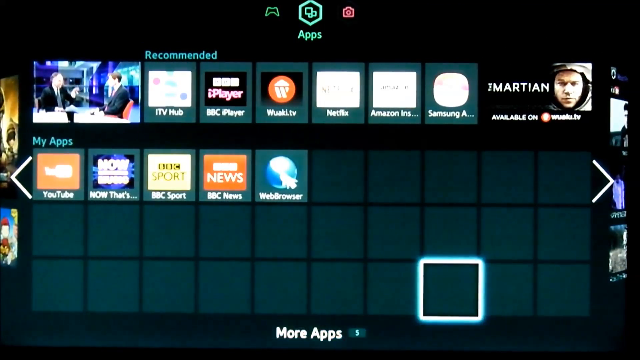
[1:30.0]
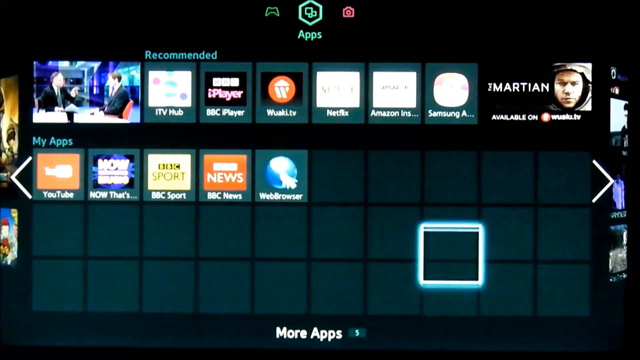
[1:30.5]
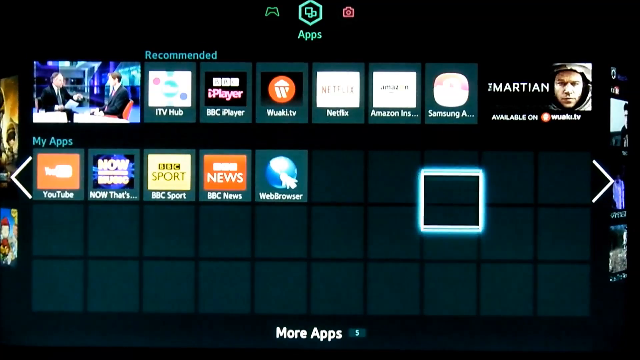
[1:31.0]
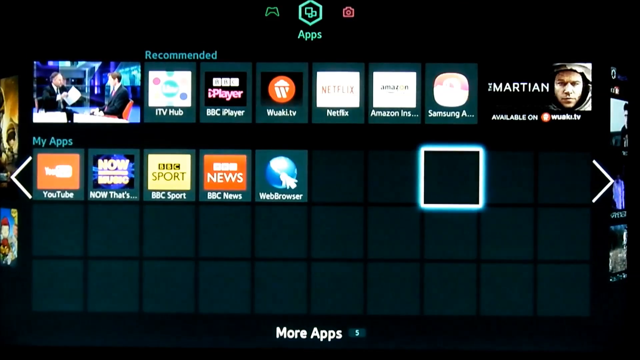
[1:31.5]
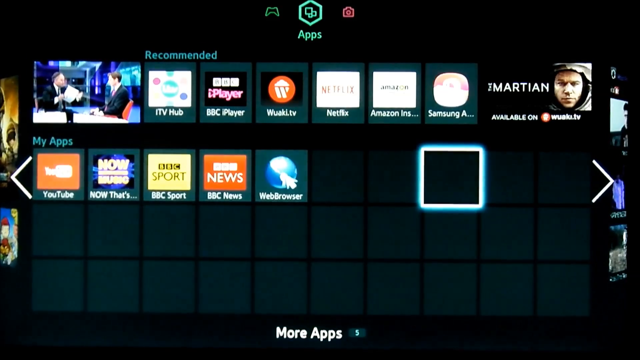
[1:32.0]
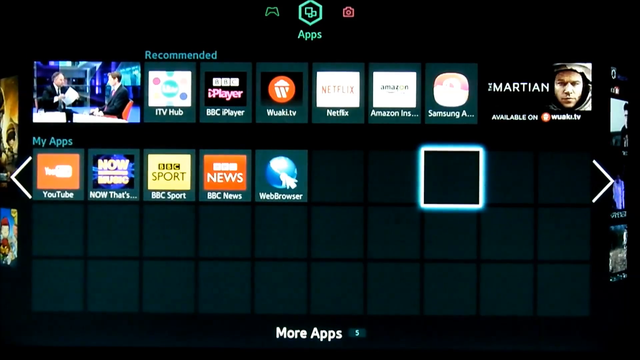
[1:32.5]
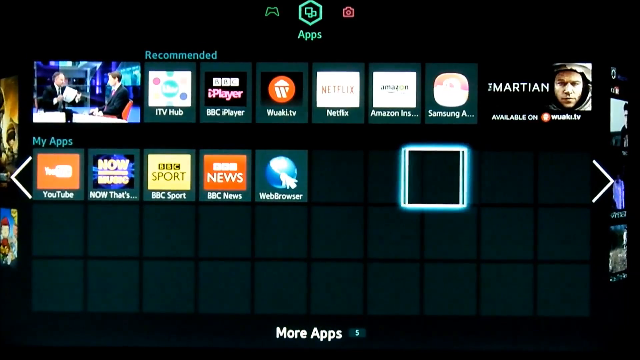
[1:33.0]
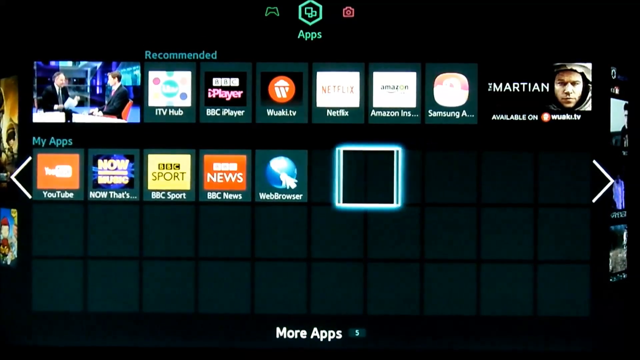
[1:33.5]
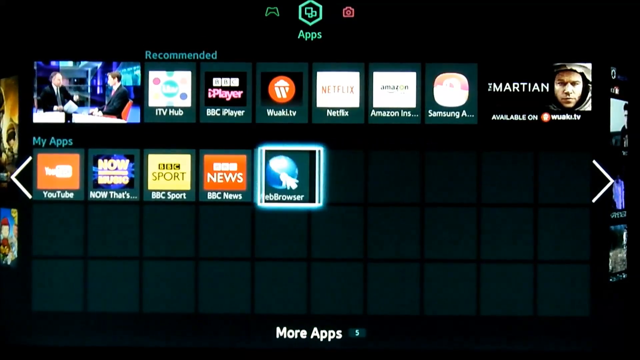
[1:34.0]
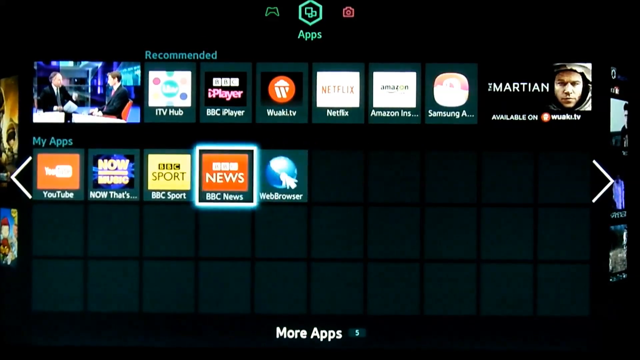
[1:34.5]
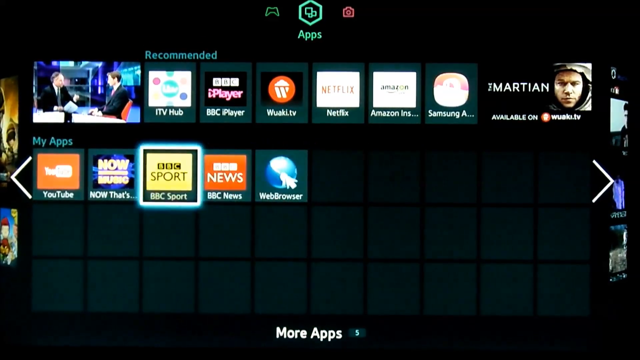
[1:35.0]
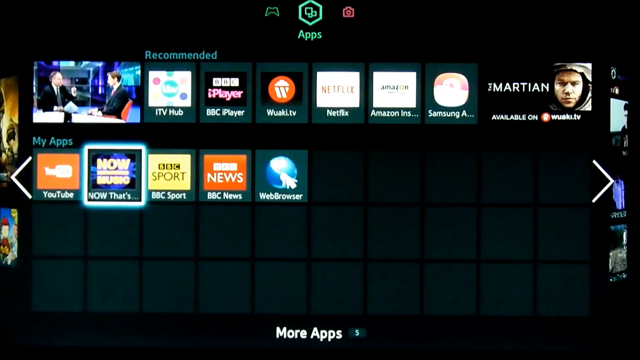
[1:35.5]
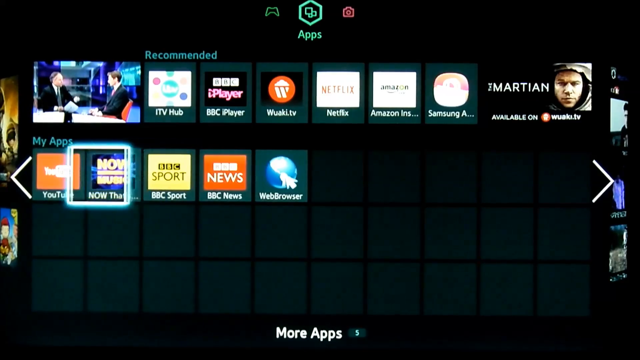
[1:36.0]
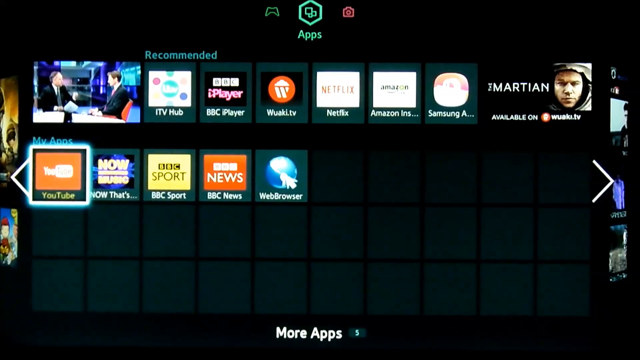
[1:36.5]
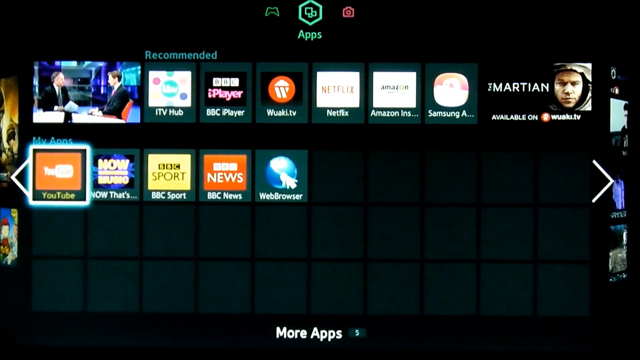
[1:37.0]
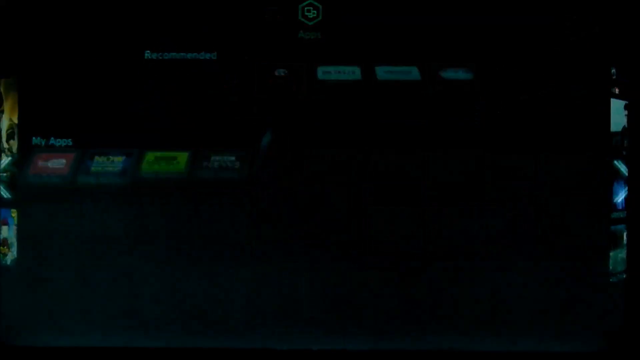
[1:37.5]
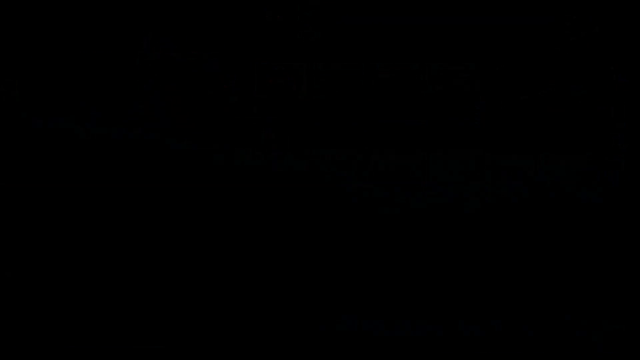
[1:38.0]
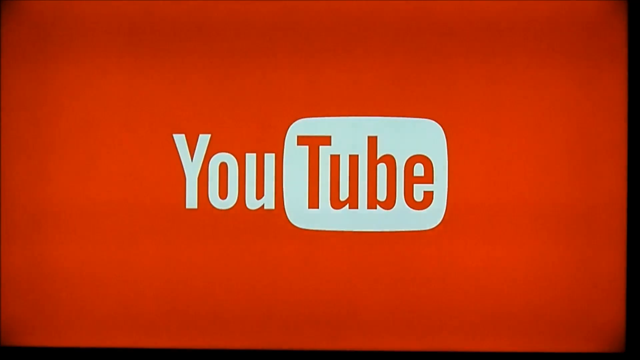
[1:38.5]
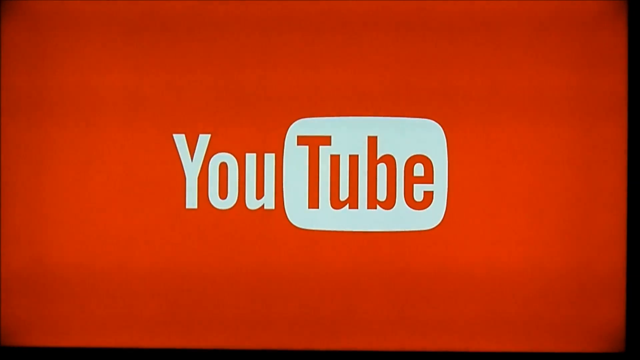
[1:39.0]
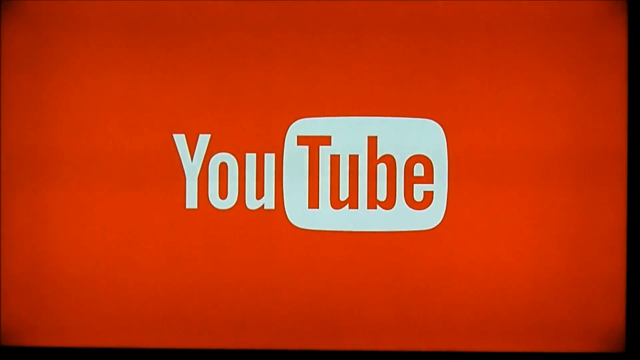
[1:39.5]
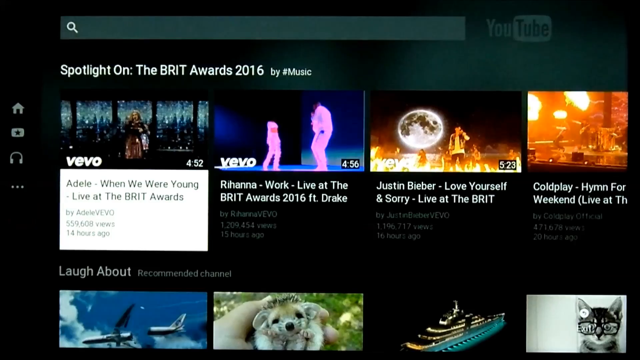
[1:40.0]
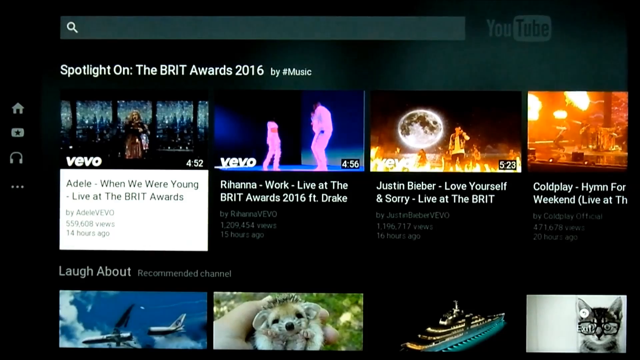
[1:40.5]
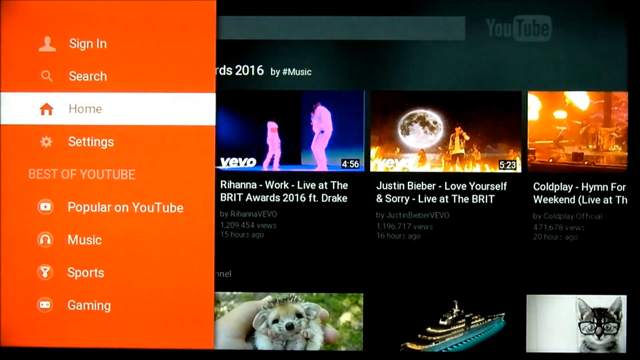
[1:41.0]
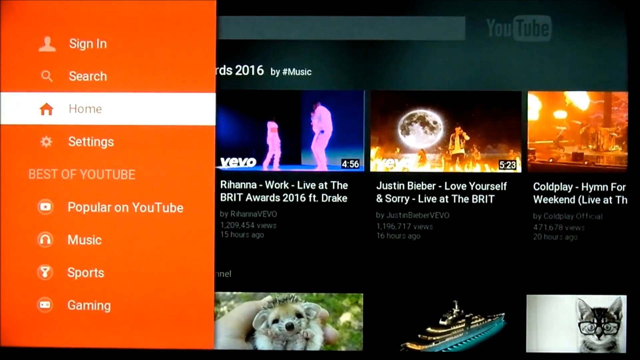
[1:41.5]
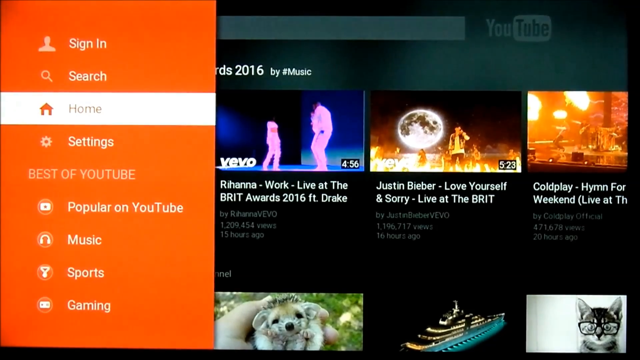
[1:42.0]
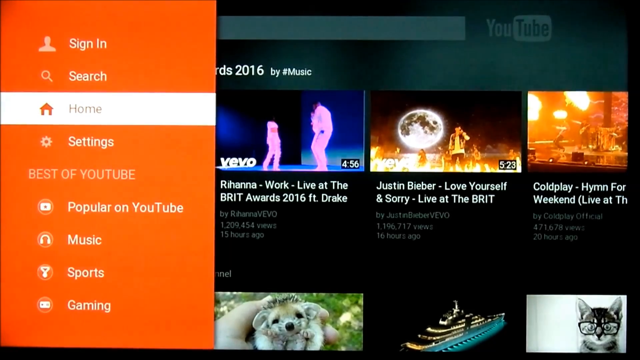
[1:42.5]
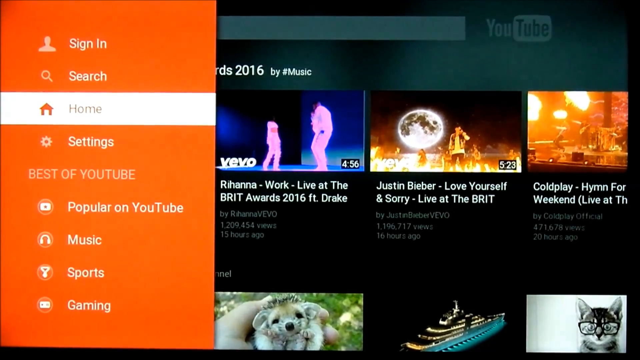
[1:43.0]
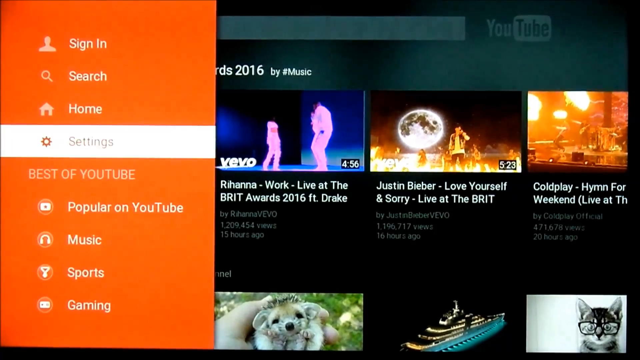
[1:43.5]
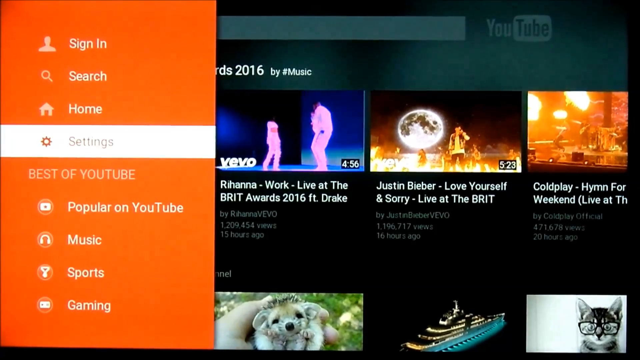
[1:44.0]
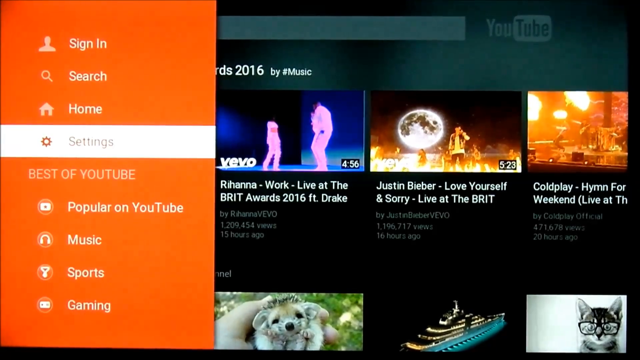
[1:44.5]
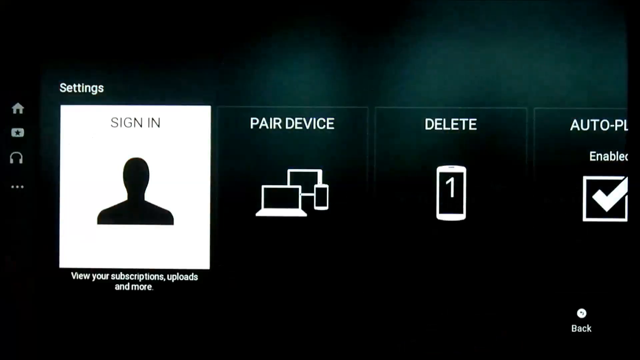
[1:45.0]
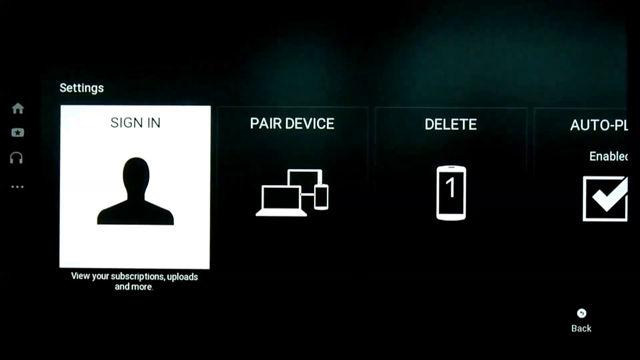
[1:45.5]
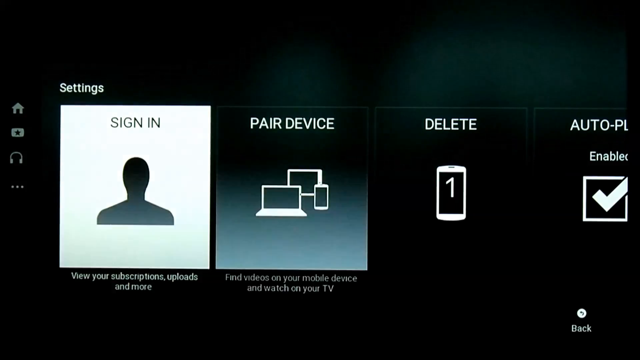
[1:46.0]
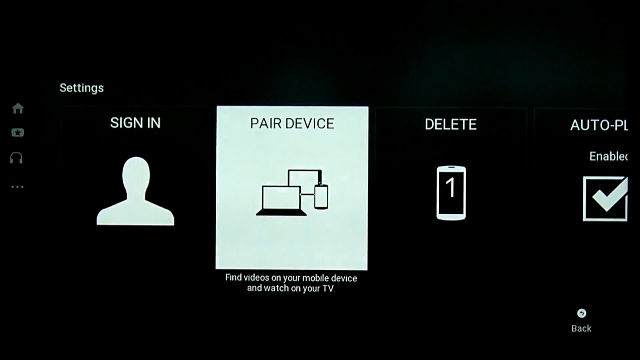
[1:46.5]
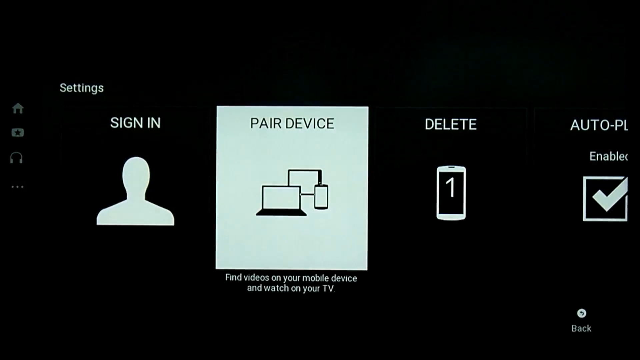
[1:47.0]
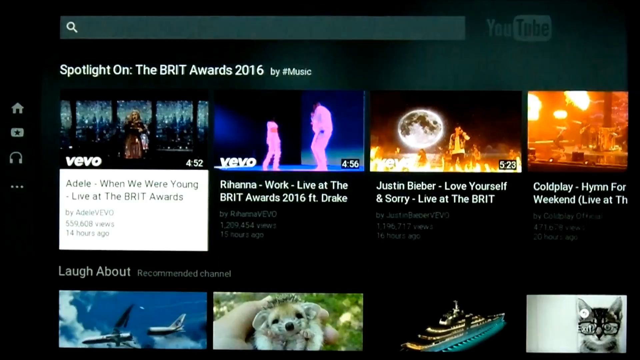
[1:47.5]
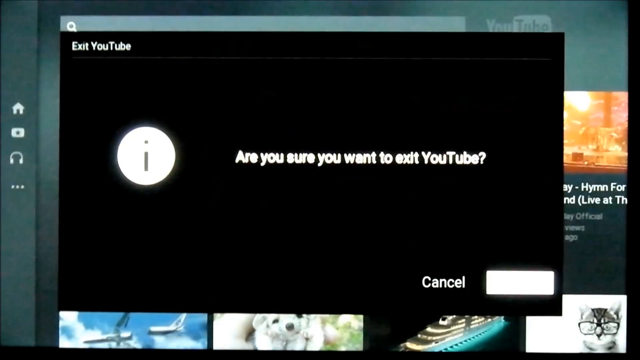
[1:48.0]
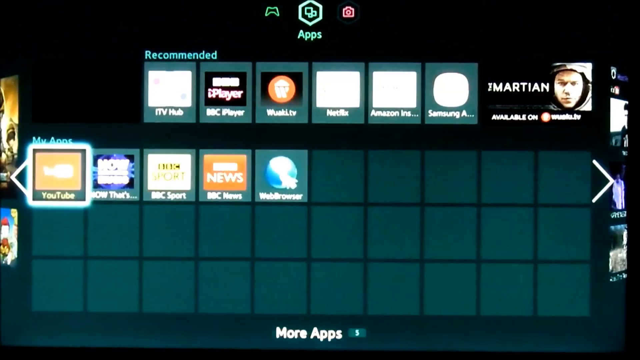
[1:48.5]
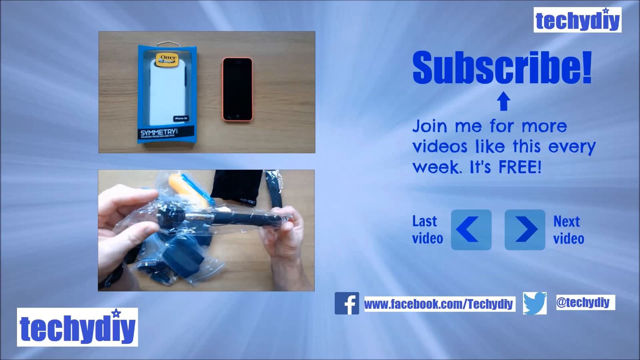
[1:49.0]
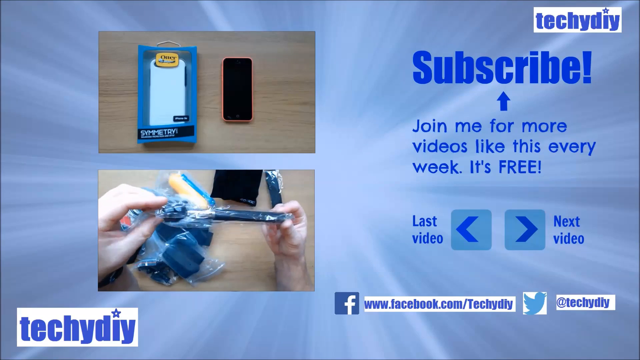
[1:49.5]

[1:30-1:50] The glowing square moves around the blank squares on the My Apps screen, which apparently shows three rows of about 10 squares each, with only five containing icons. The YouTube icon is clicked, opening the YouTube screen, which shows that a lot of Rihanna, Justin Bieber and Coldplay has been watched. The menu, an orange box on the left-hand side of the screen, is opened and settings is selected, highlighted in white. The settings screen shows four options: sign in, pair device, delete and autoplay, and the selection seems to move over to pair device.